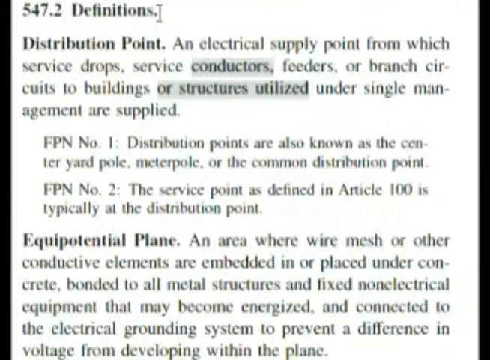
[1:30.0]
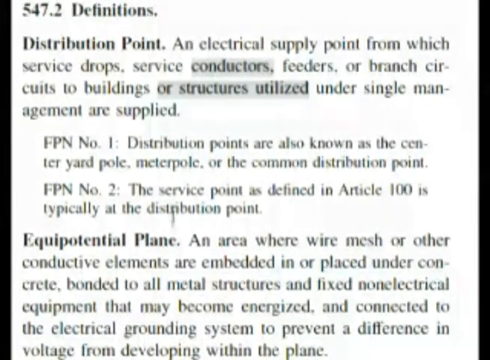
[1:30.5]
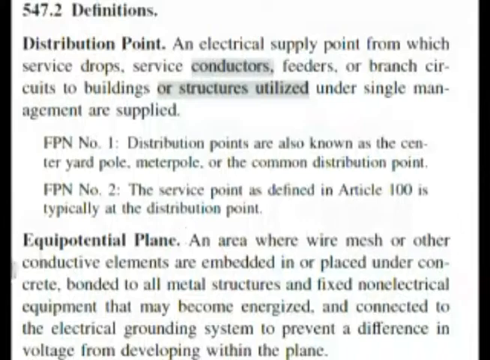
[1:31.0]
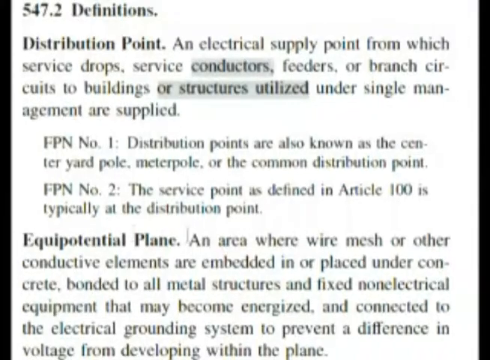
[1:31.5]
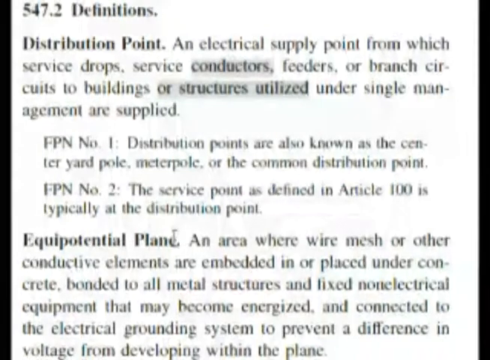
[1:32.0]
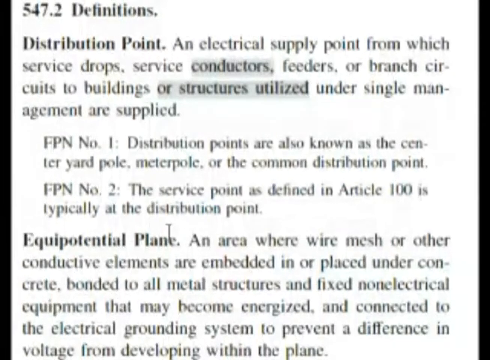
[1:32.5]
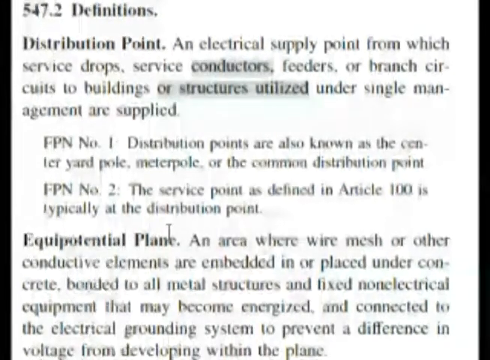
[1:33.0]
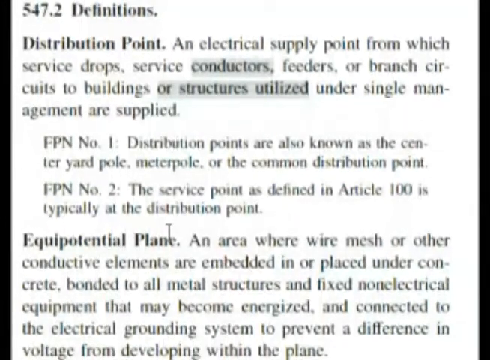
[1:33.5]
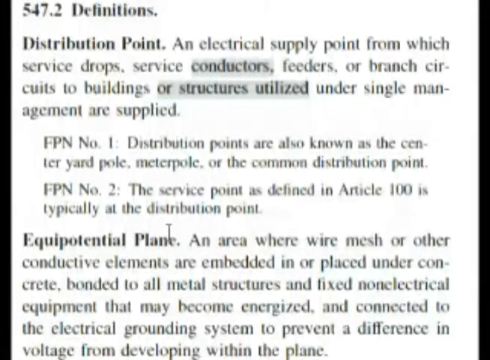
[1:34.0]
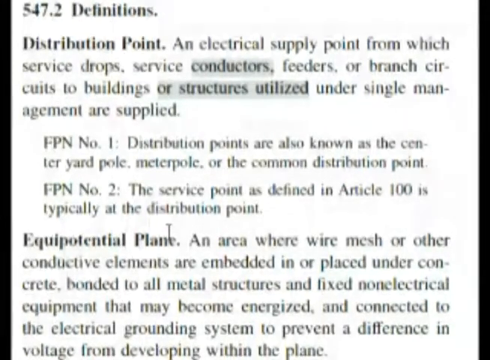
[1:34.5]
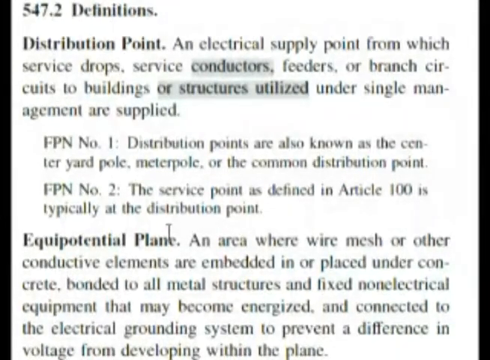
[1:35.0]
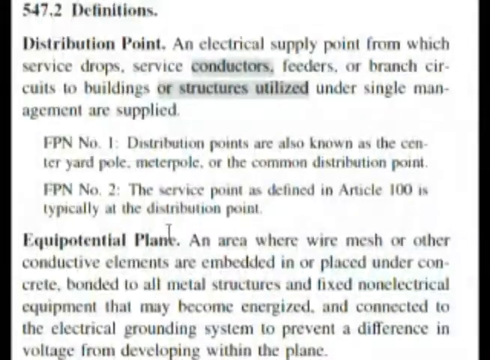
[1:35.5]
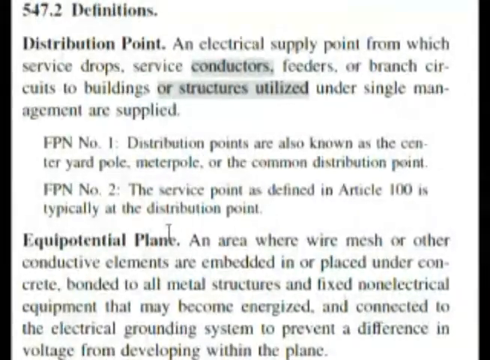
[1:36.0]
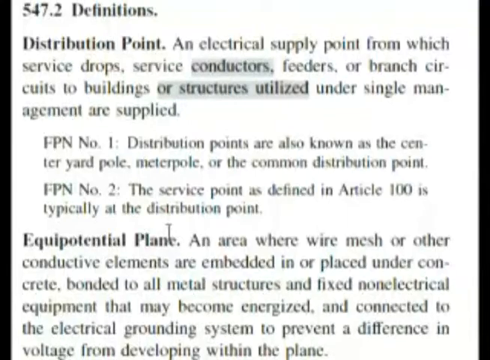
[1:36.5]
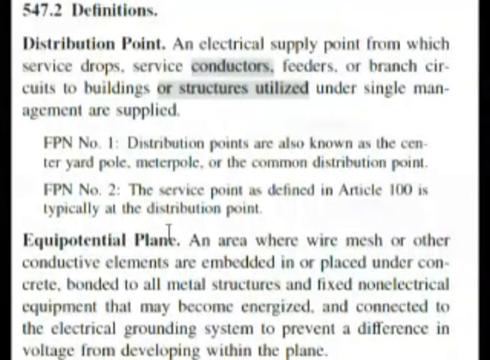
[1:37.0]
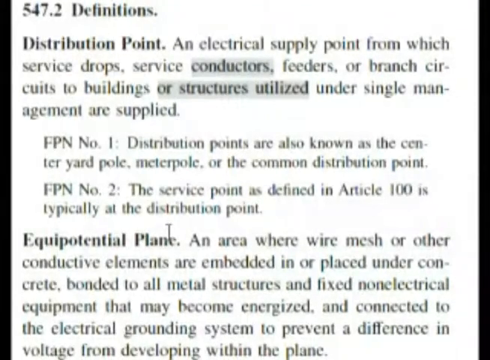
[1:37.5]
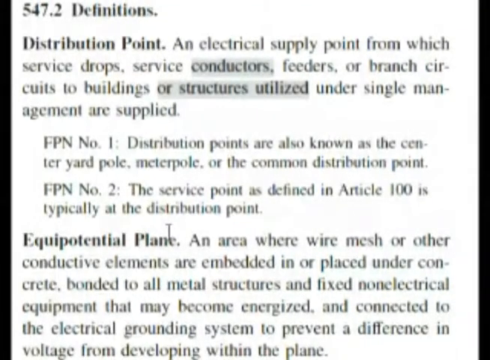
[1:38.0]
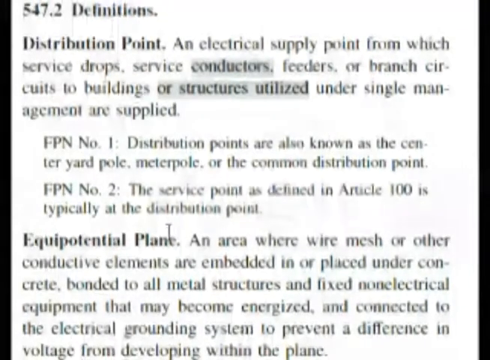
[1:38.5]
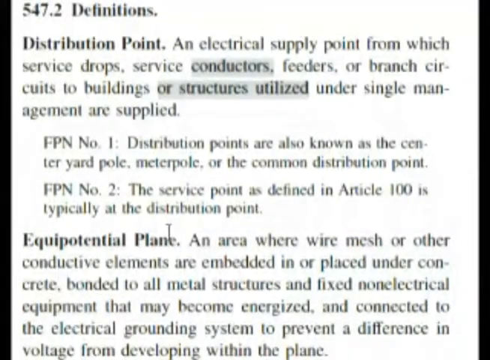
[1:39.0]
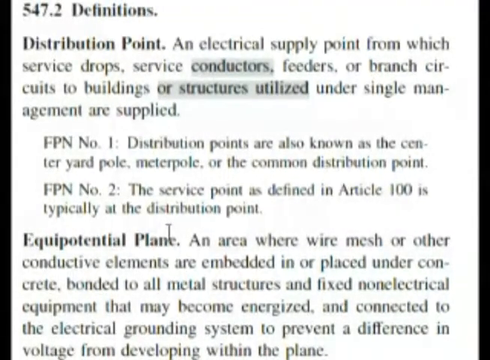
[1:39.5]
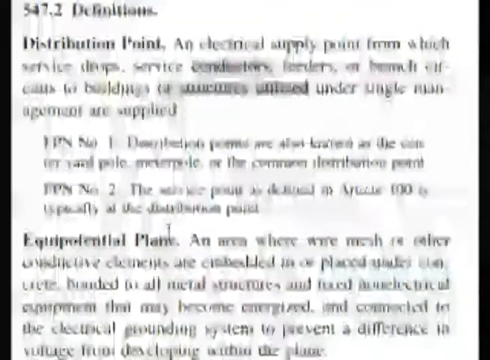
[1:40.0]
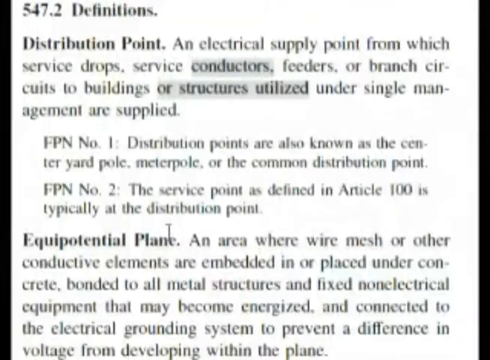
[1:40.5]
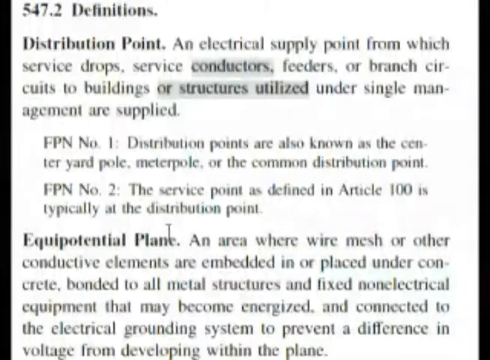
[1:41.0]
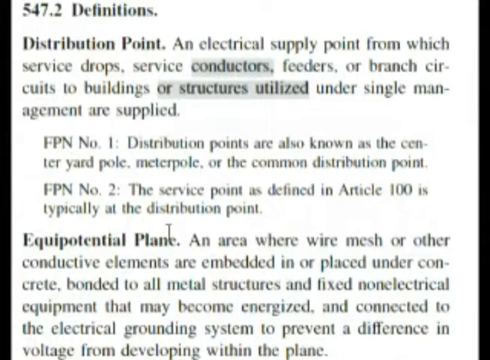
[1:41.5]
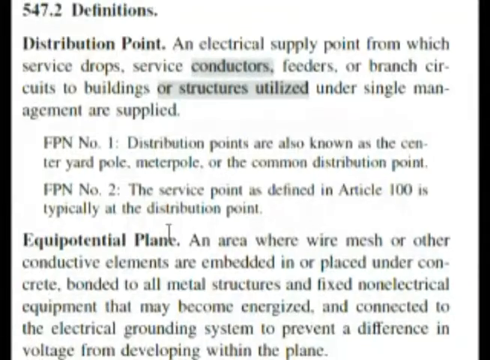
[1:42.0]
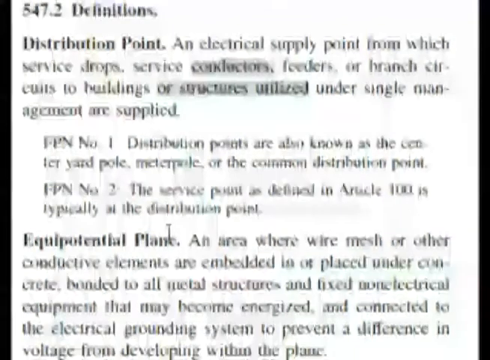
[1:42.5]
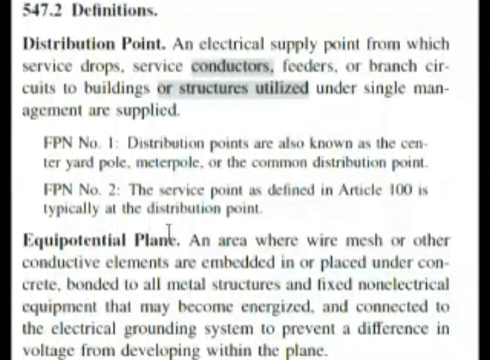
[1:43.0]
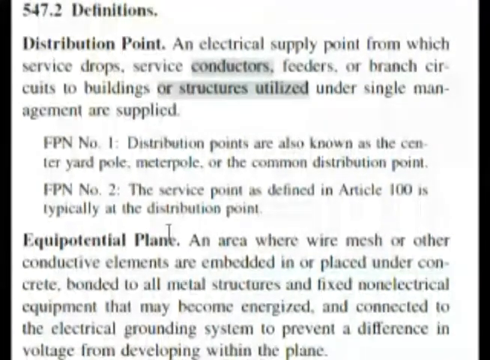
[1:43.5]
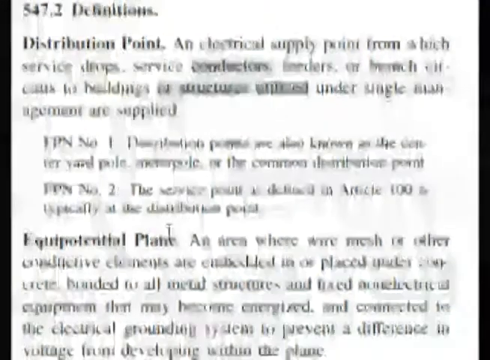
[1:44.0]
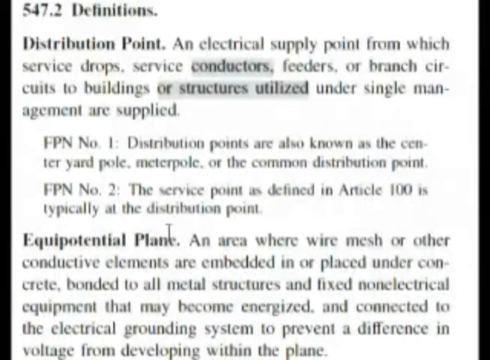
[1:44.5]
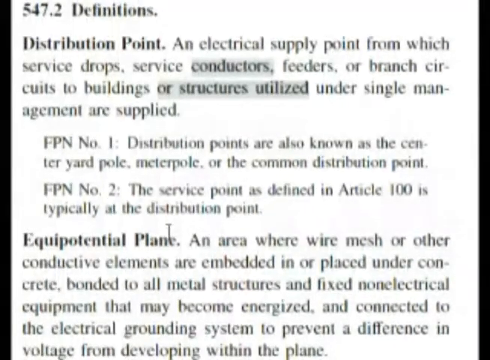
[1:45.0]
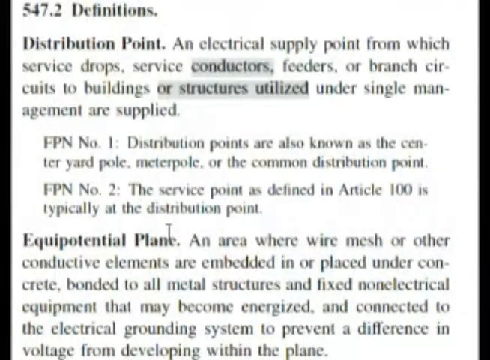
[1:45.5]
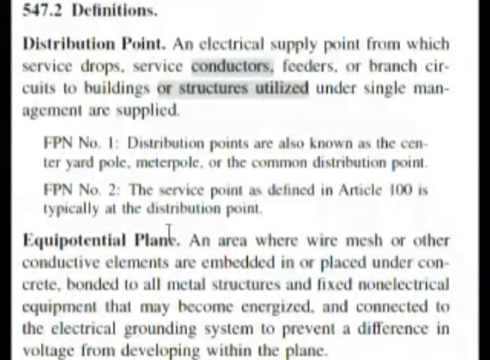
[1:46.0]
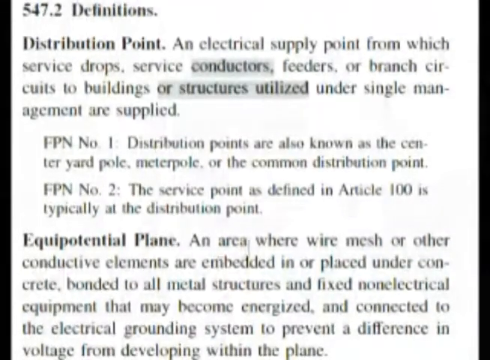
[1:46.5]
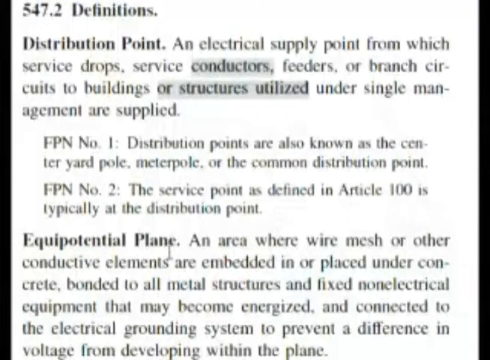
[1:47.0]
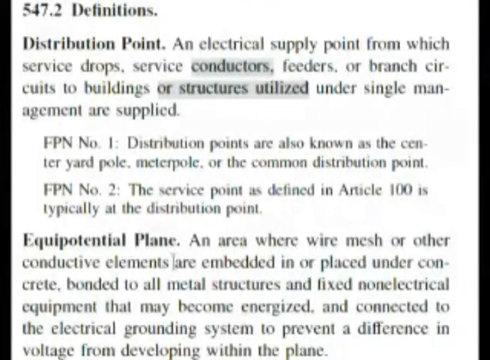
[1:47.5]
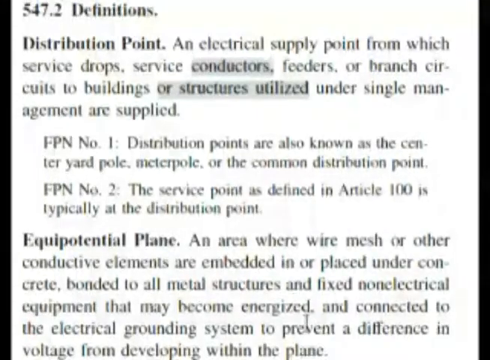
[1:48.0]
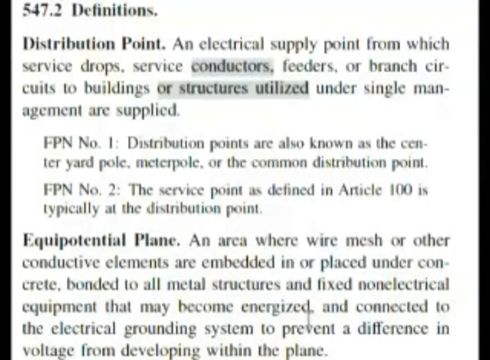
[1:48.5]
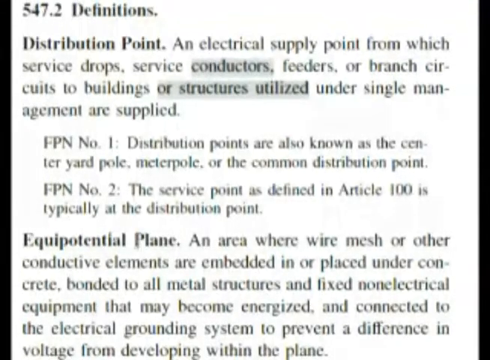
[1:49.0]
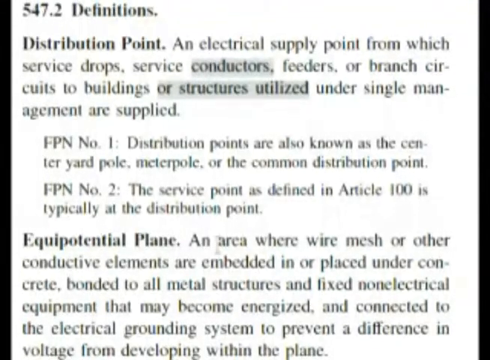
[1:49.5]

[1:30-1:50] The definitions remain on the screen as the cursor bounces around, pointing to Equipotential Plane; nothing new is shown. The definition reads: "an area where wire mesh or other conductive elements are embedded in or placed under concrete bonded to all metal structures and fixed non electrical equipment that may become energized and connected to the electrical grounding system to prevent a difference in voltage from developing within the plane." Above it is the definition for distribution point: "an electrical supply point from which service drops, service conductors, feeders, or branch circuits to buildings or structures utilized under single management are supplied," followed by "FPN number one. Distribution points are also known as the center yard pole, meter pole, or the common distribution point. FPN number two, the service point as defined in article 100 is typically at the distribution point."